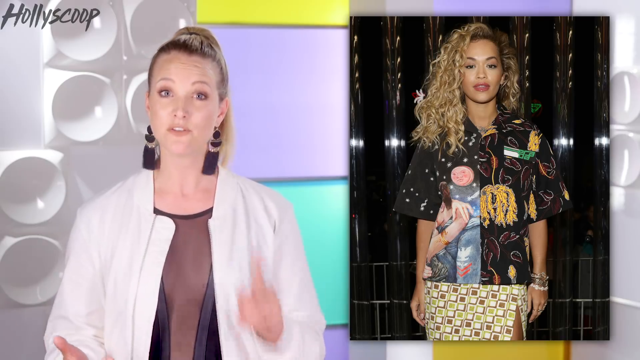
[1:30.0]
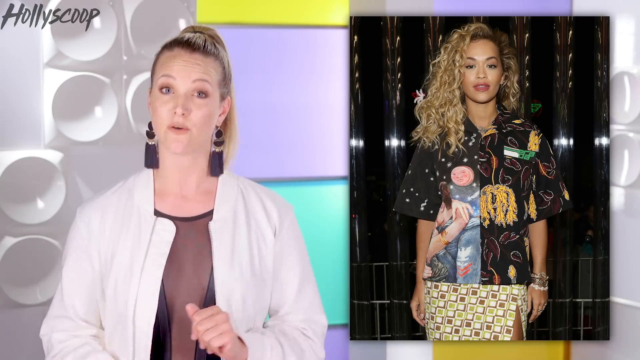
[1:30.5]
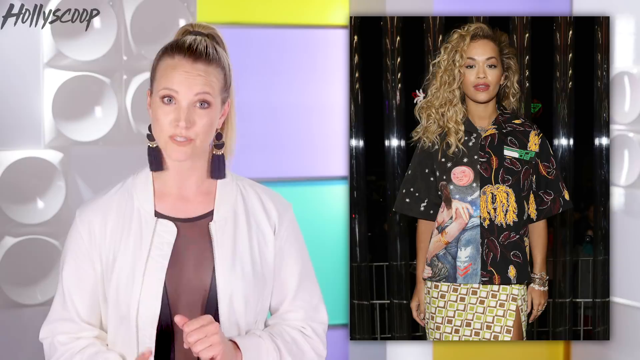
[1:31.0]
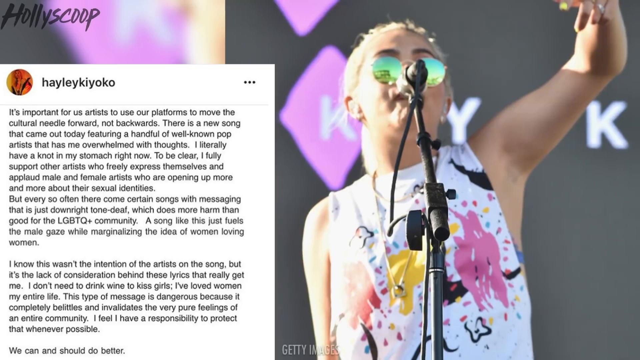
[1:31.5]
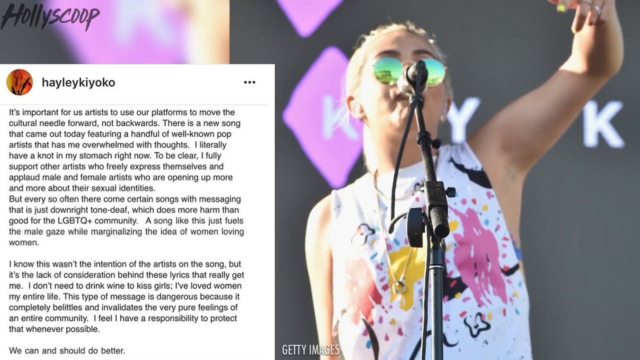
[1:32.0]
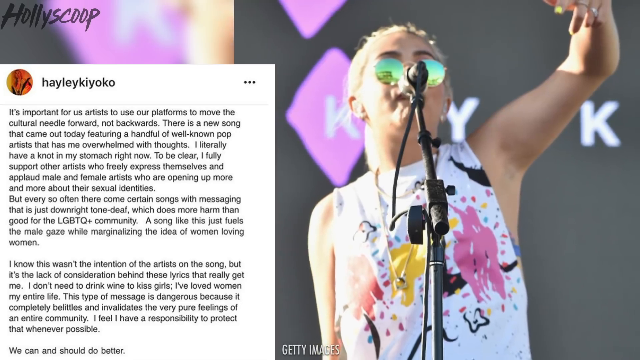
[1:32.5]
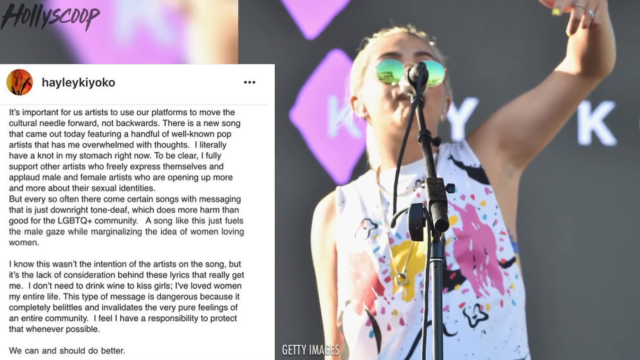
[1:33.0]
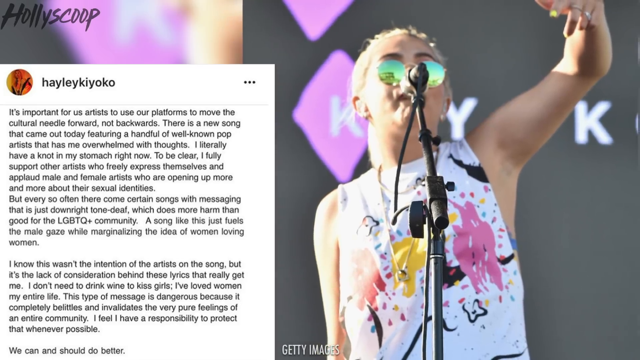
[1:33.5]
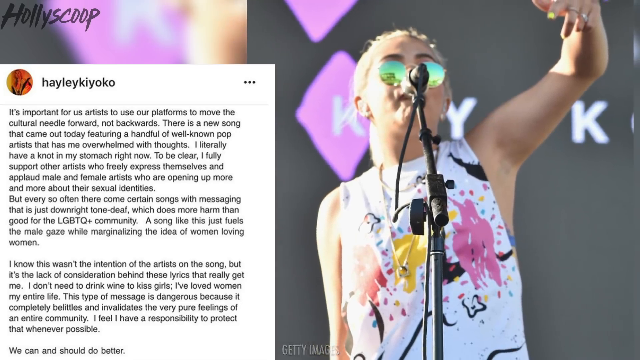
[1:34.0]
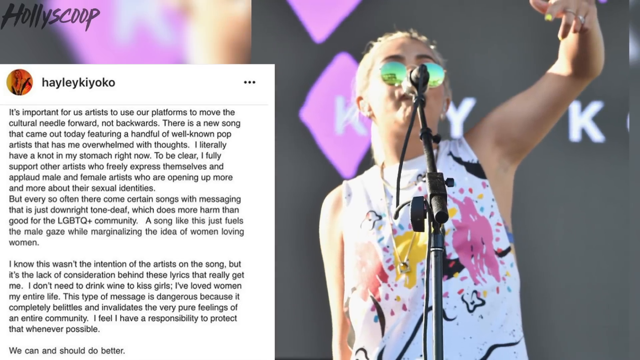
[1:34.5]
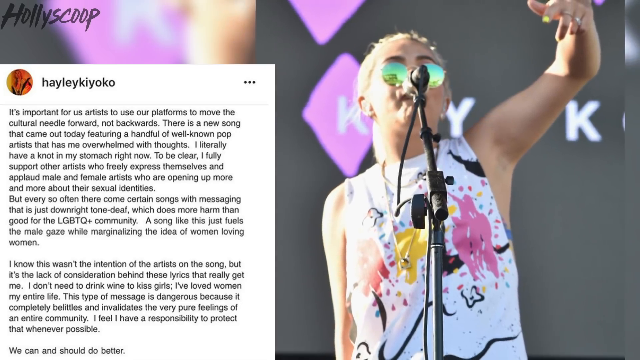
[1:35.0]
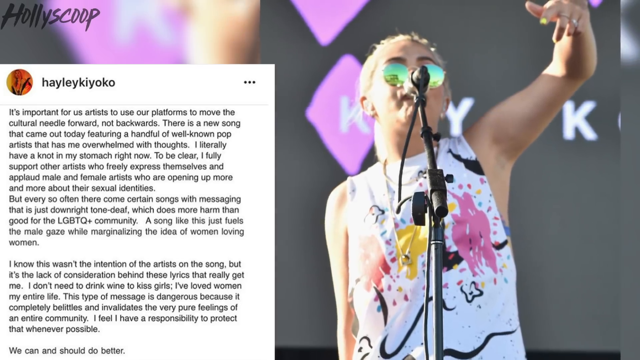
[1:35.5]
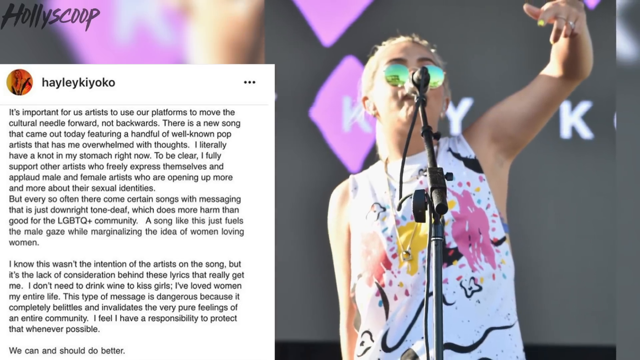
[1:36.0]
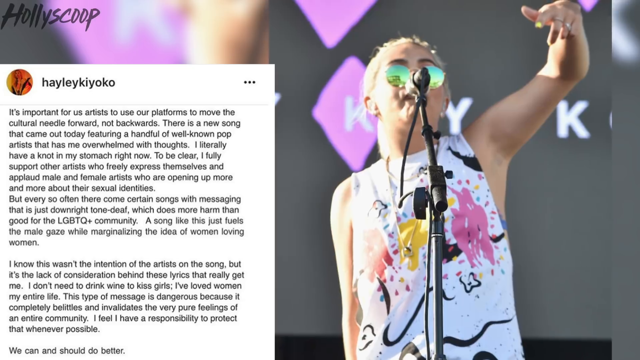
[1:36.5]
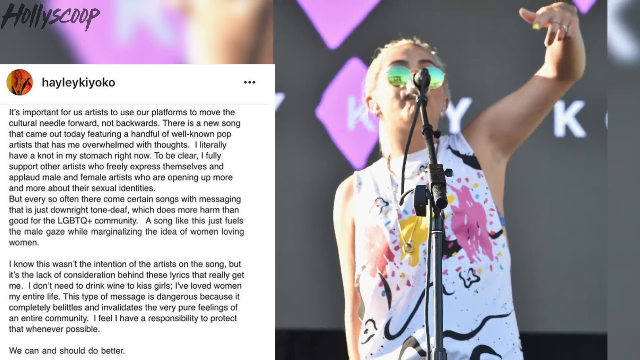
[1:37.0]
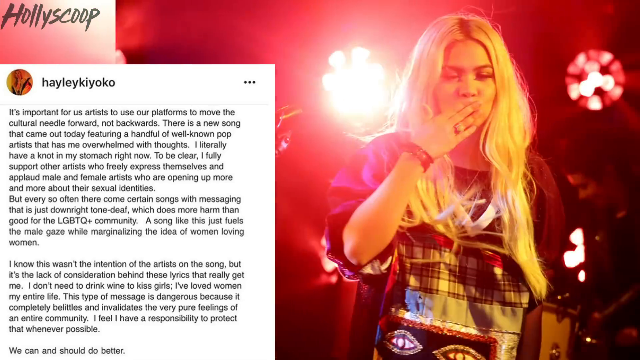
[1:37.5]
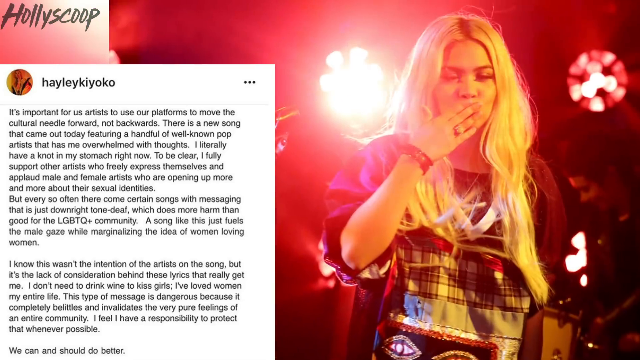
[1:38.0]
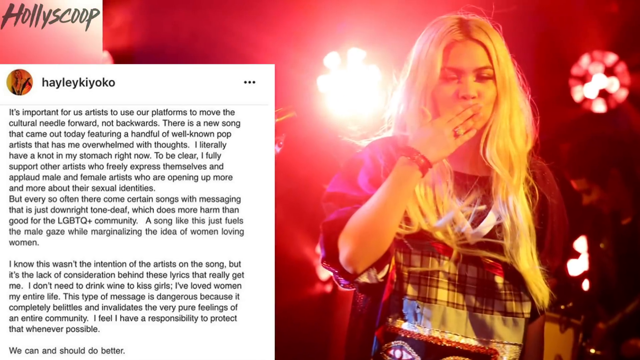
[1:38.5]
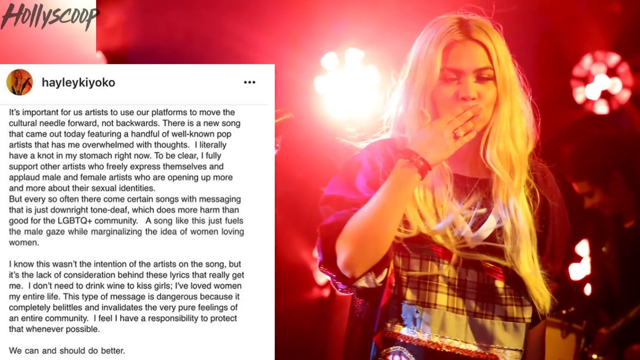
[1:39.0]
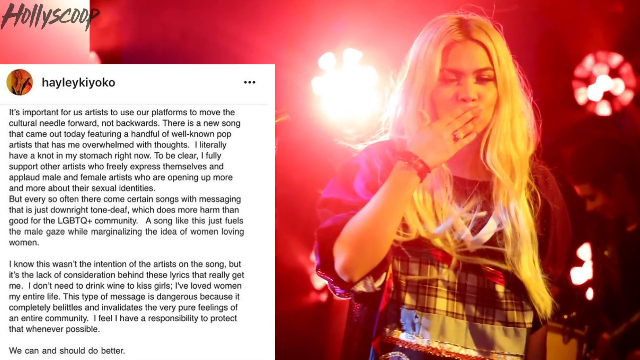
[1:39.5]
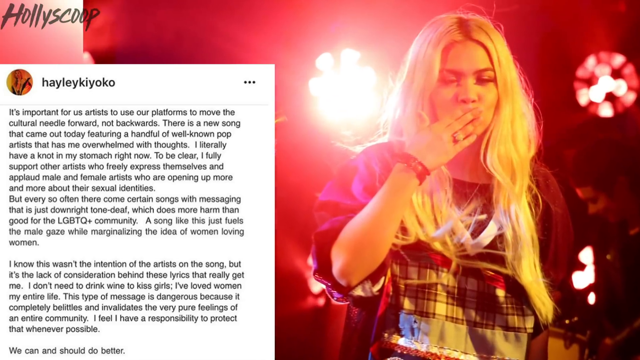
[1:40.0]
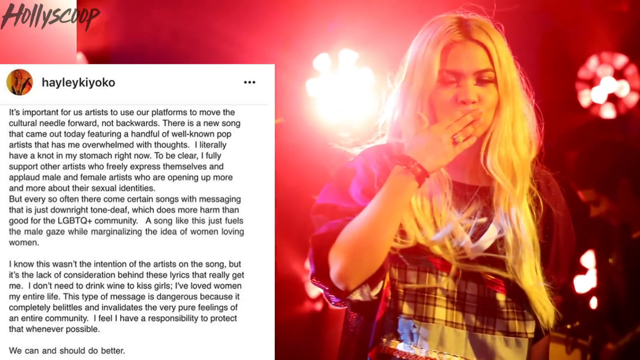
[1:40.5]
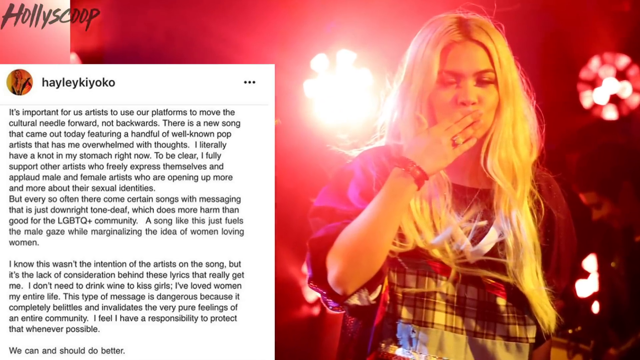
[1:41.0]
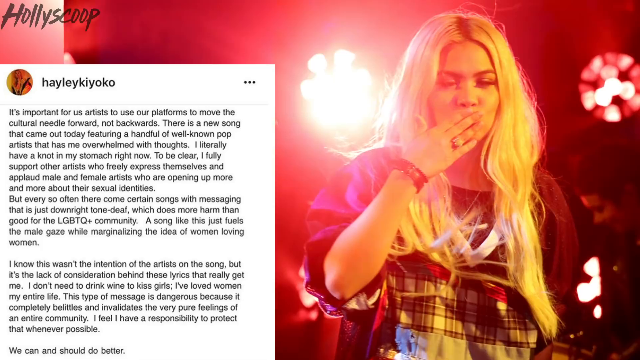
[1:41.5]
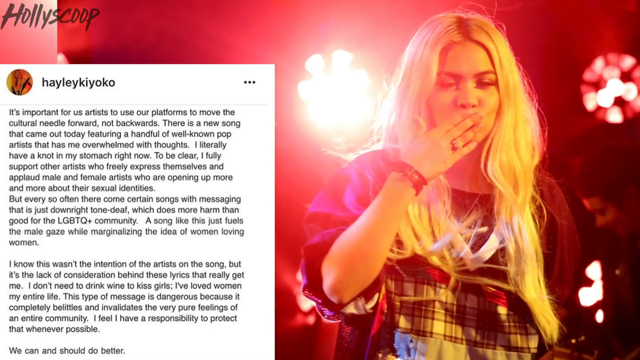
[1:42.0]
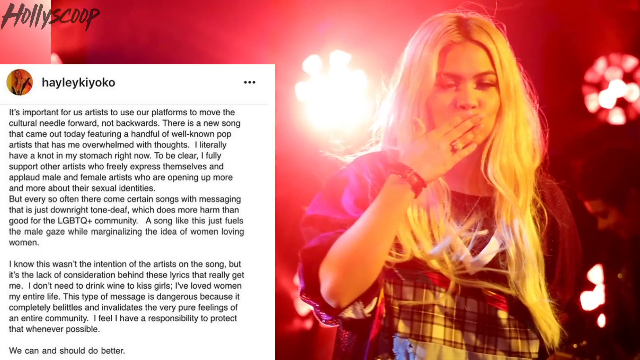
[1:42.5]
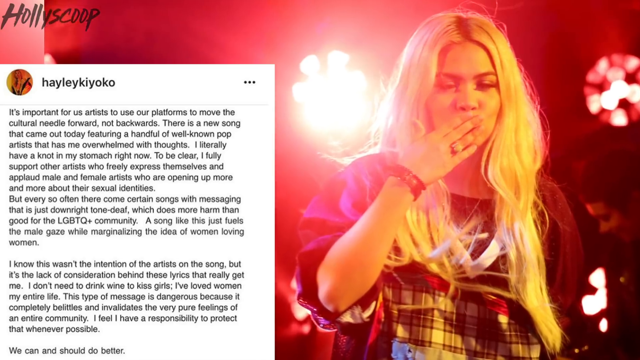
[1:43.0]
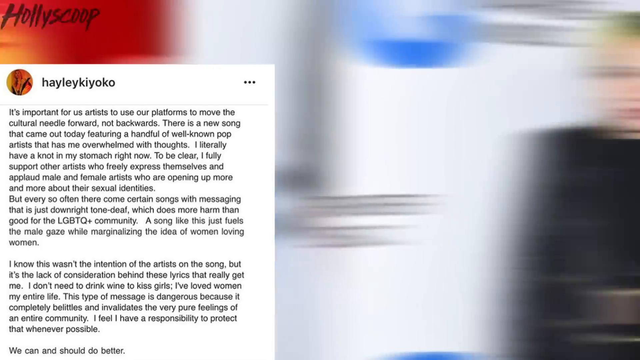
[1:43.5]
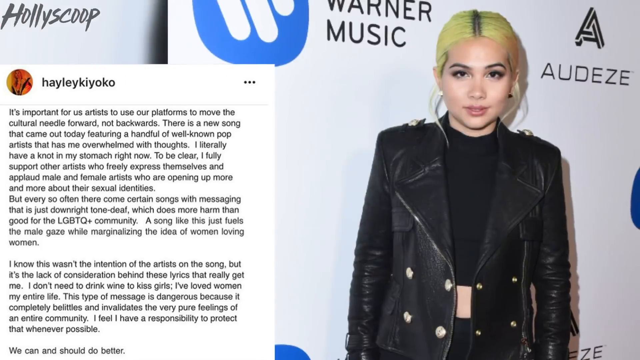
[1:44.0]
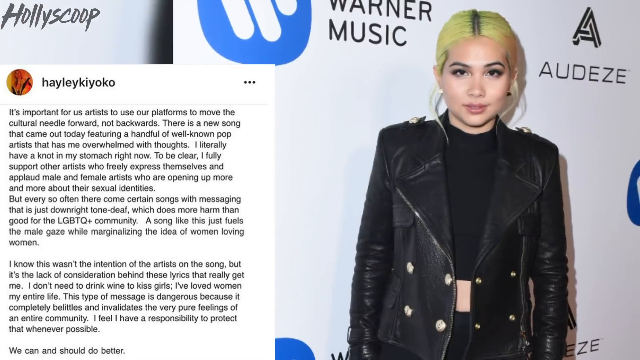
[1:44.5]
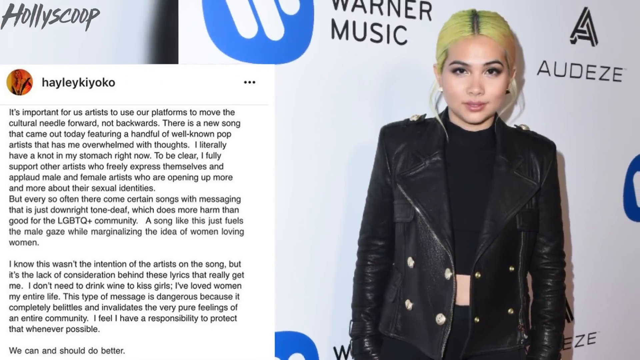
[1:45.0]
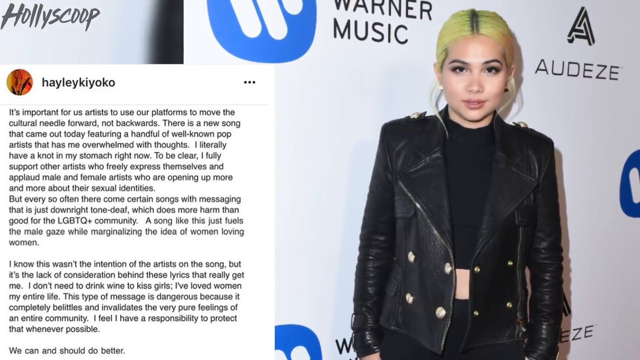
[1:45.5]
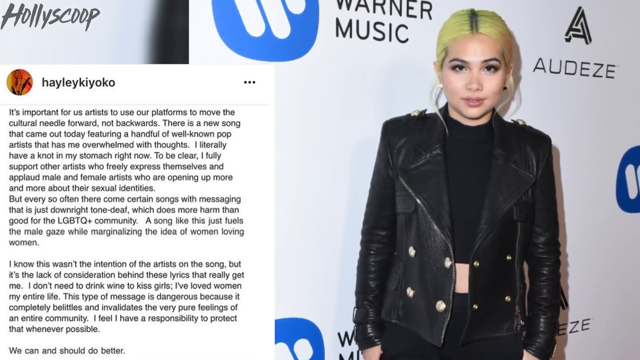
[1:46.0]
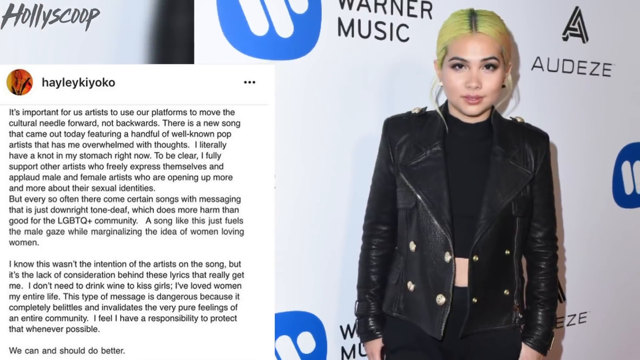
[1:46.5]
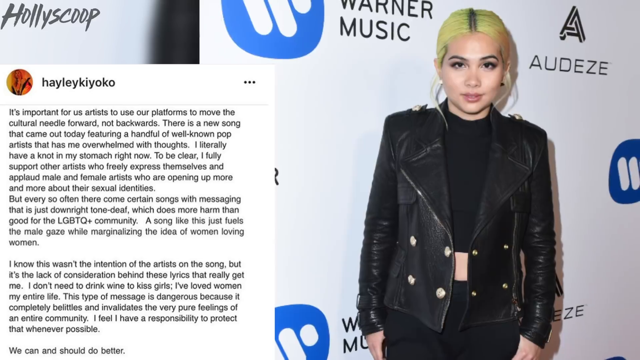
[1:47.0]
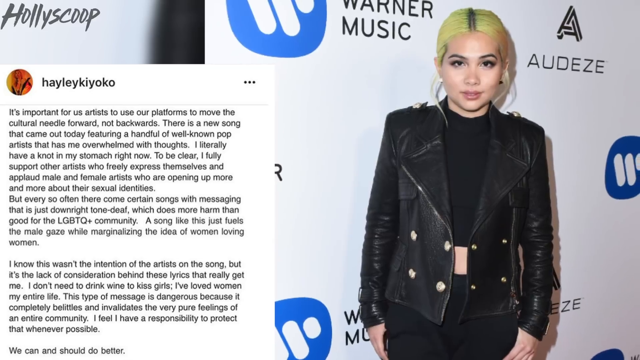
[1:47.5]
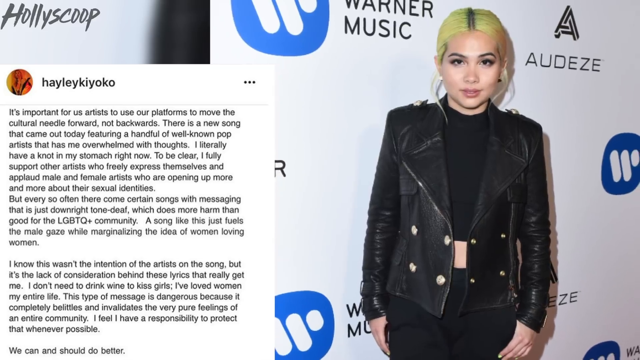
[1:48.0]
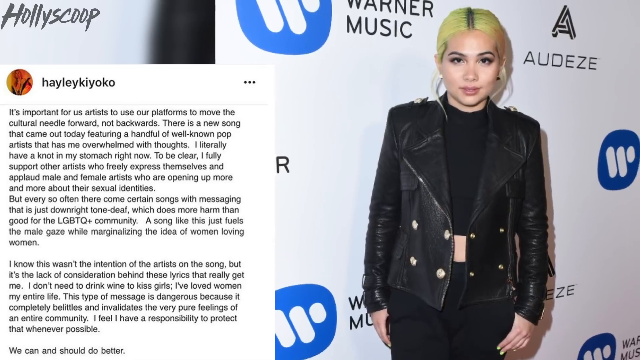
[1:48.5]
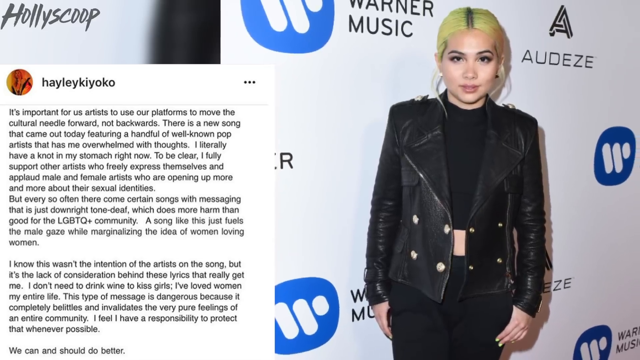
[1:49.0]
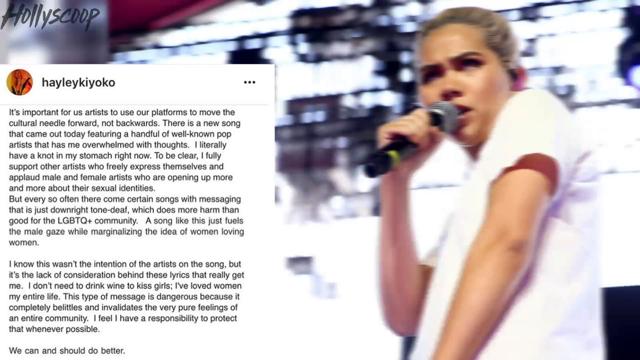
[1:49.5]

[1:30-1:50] The host talks briefly before a cut to a picture of Hayley Kiyoko performing on the right side, wearing colored aviators and a graphic shirt with cut-off sleeves, primarily white with splashes of pink, yellow and other colors, with a microphone in front of her. On the left side the same Instagram post by Hayley Kiyoko is shown. The image zooms out, then cuts to another image of Hayley Kiyoko against a very bright red background that looks to be a live stage. Another picture shows her with yellowy-green hair on a red carpet for Warner Music, in a black leather jacket and a full black ensemble, before a cut to a picture of her holding a mic on stage.